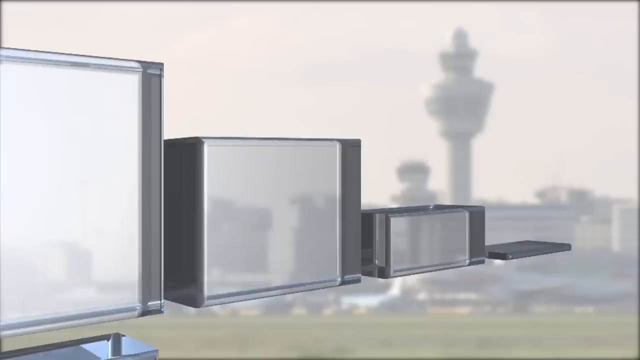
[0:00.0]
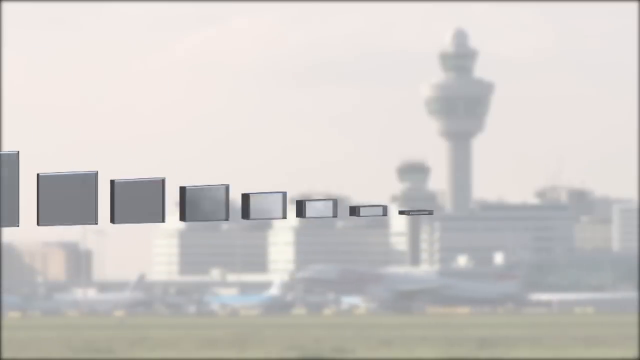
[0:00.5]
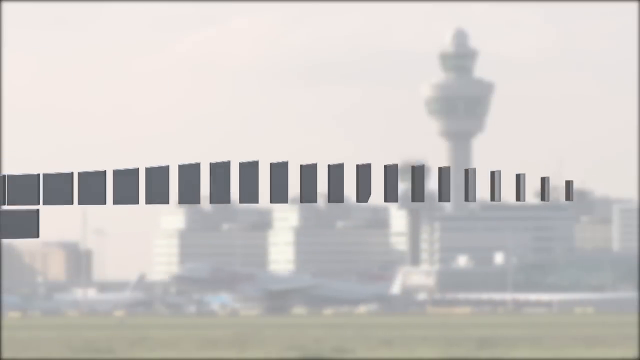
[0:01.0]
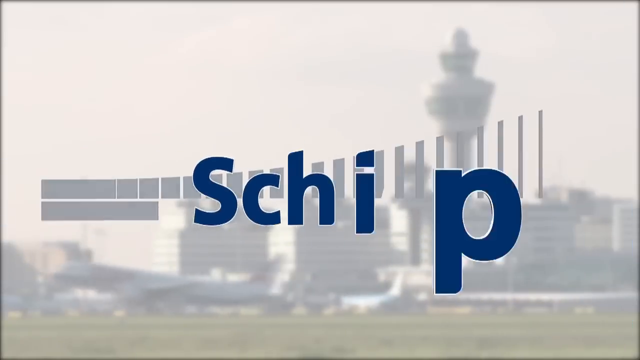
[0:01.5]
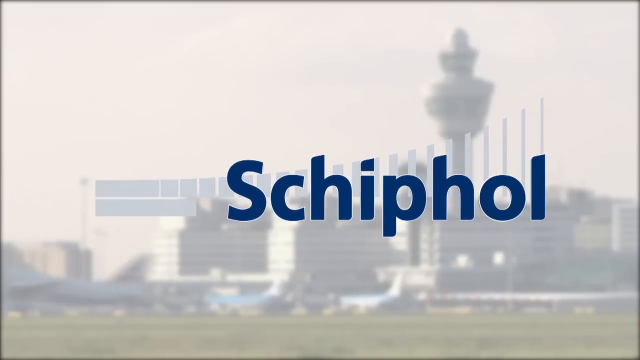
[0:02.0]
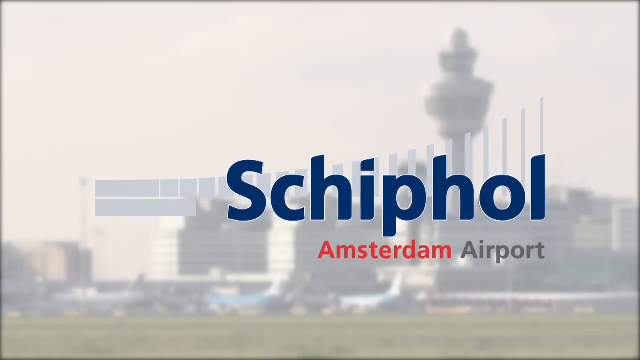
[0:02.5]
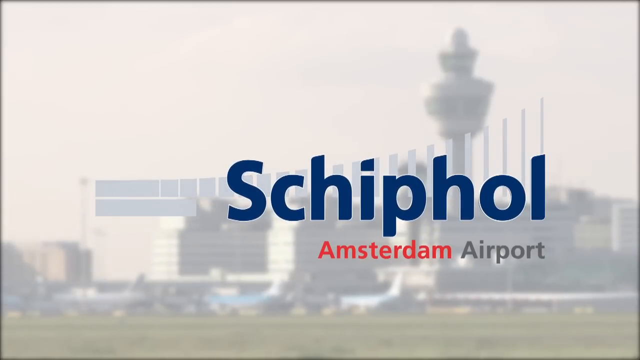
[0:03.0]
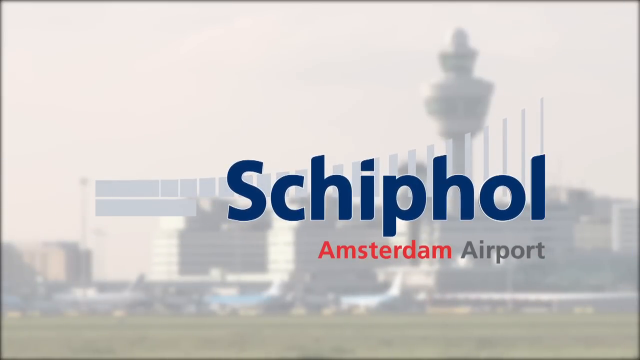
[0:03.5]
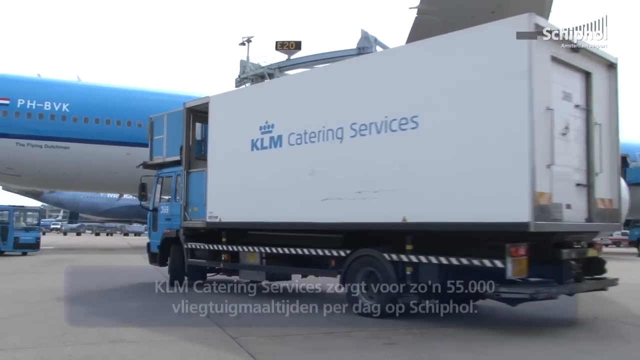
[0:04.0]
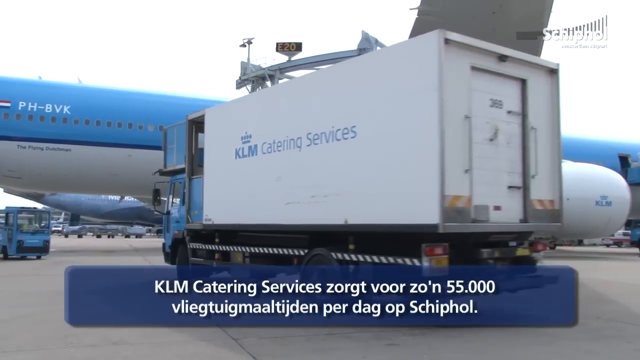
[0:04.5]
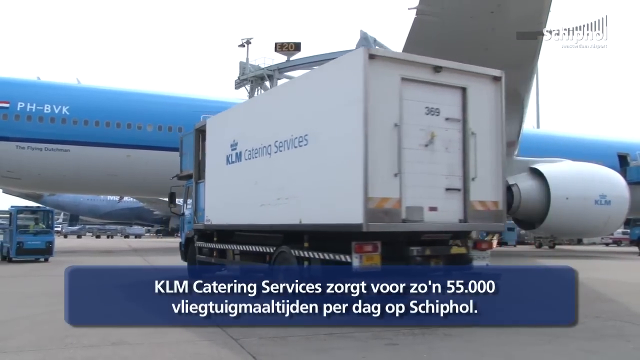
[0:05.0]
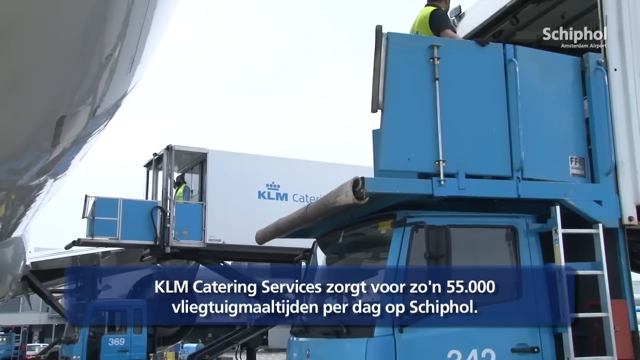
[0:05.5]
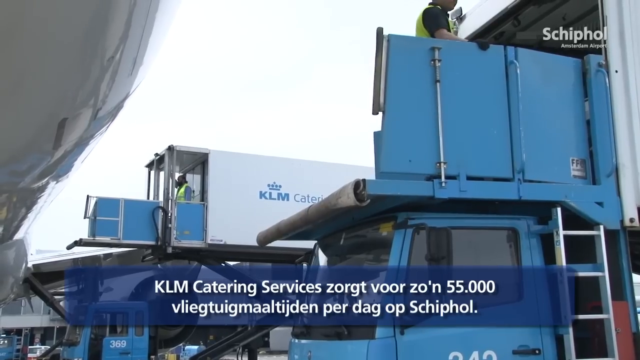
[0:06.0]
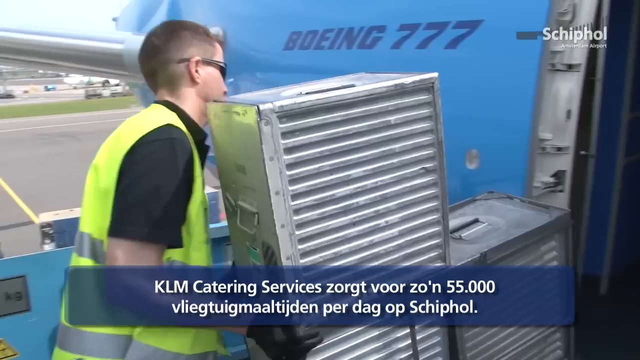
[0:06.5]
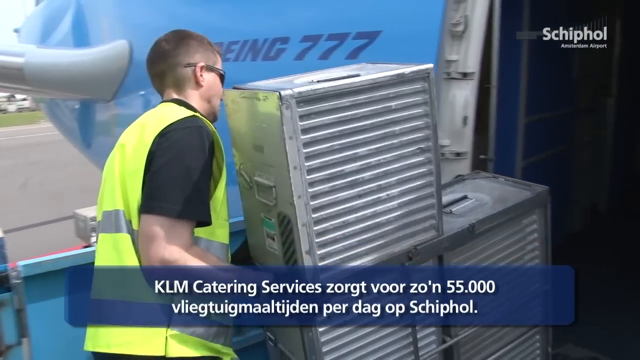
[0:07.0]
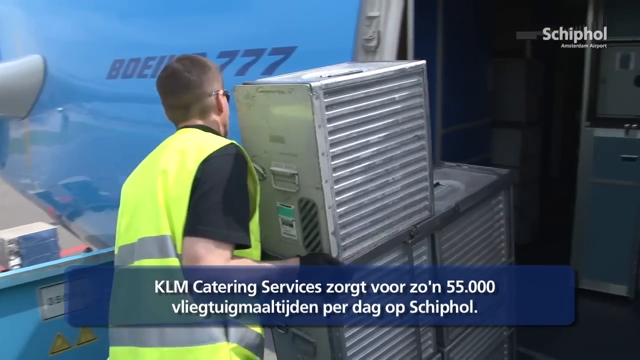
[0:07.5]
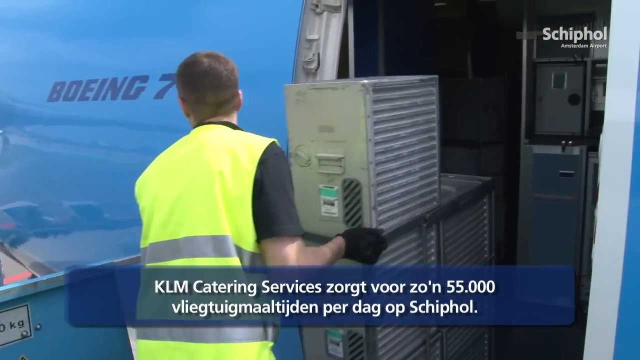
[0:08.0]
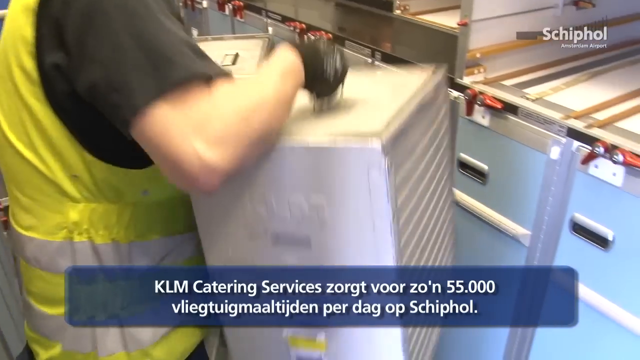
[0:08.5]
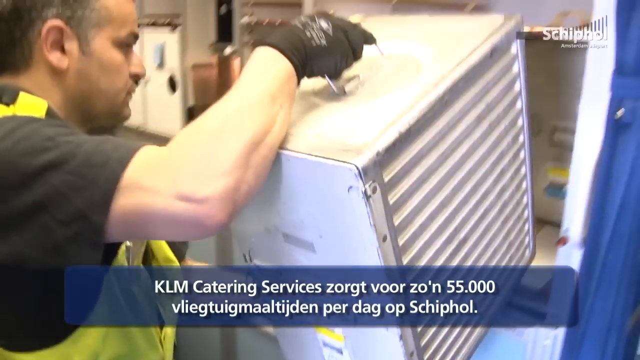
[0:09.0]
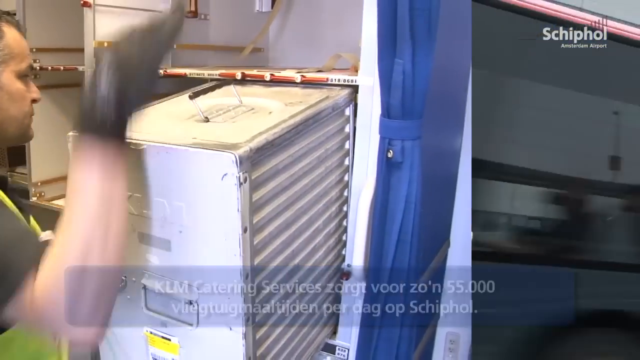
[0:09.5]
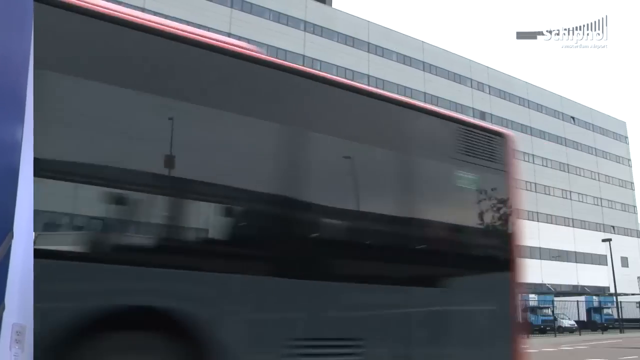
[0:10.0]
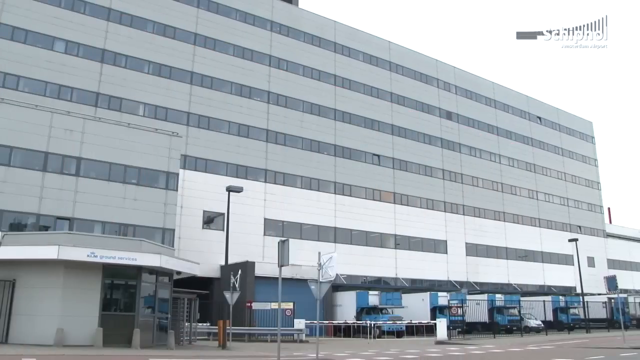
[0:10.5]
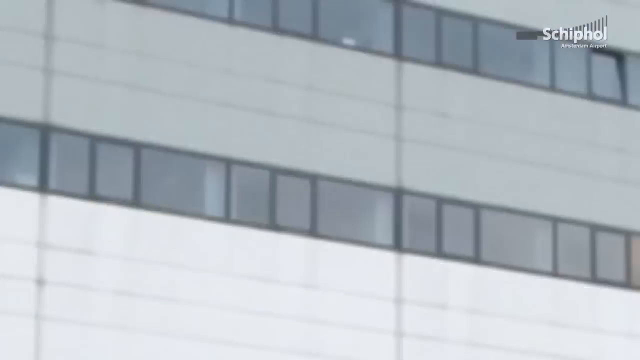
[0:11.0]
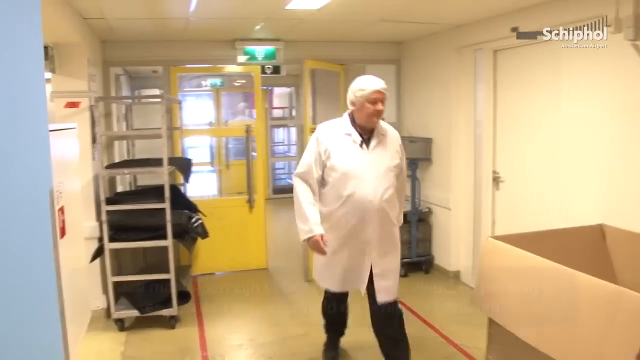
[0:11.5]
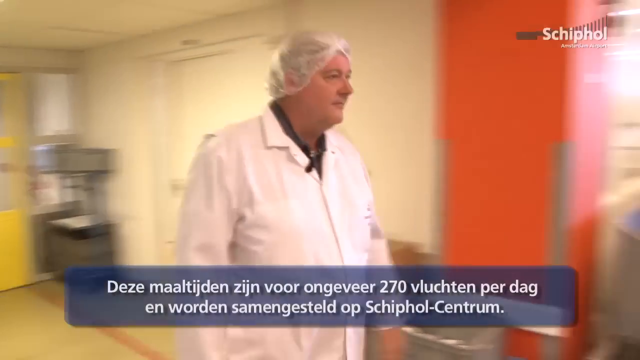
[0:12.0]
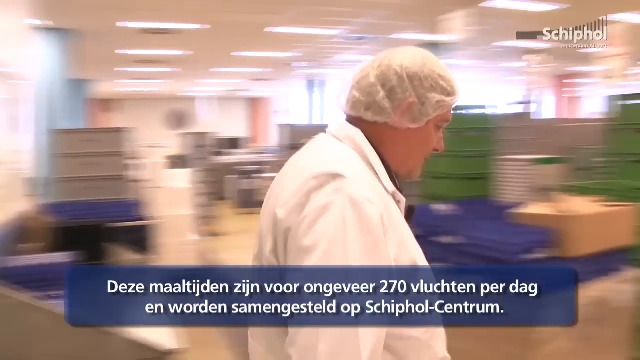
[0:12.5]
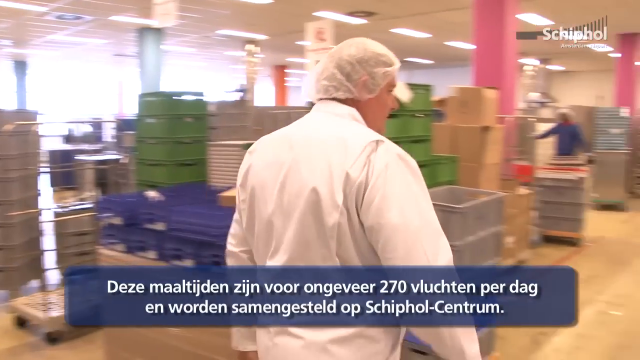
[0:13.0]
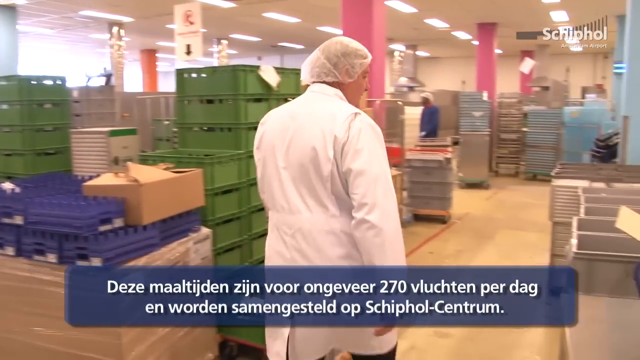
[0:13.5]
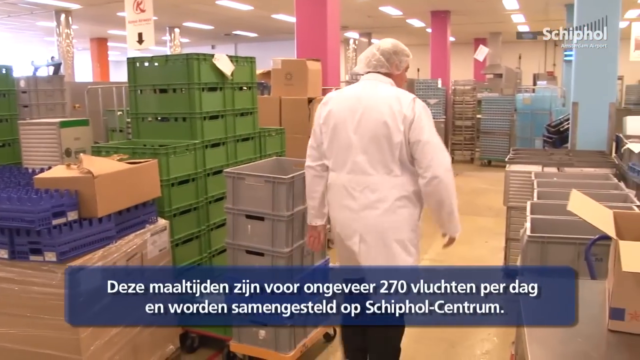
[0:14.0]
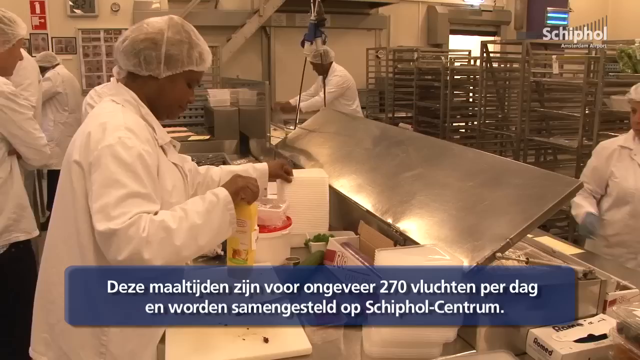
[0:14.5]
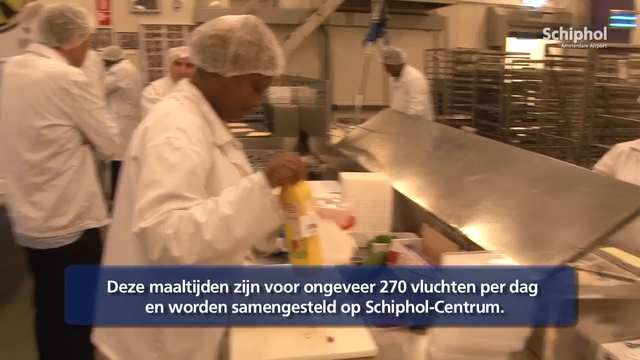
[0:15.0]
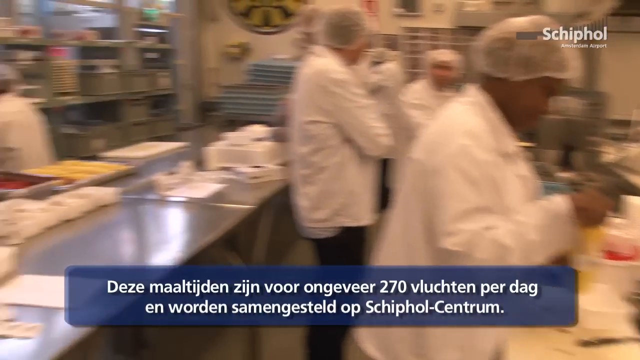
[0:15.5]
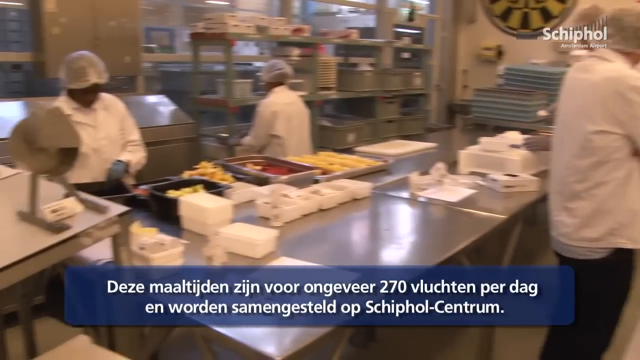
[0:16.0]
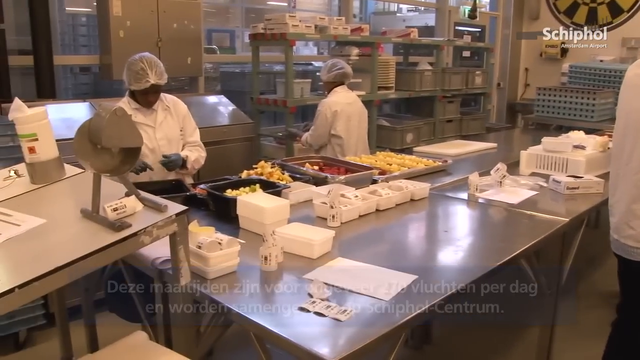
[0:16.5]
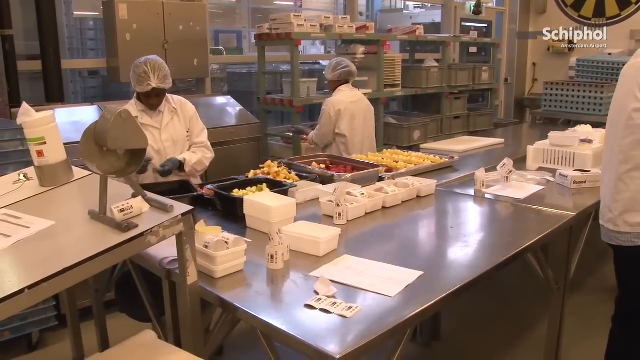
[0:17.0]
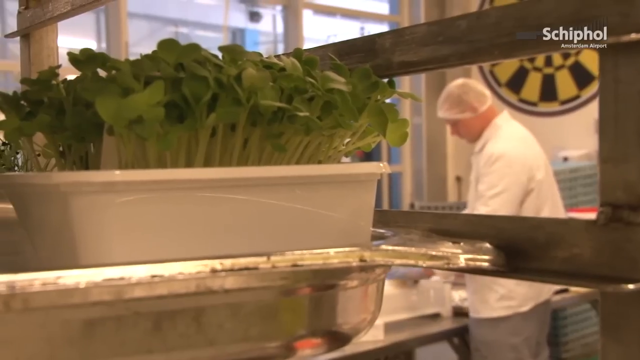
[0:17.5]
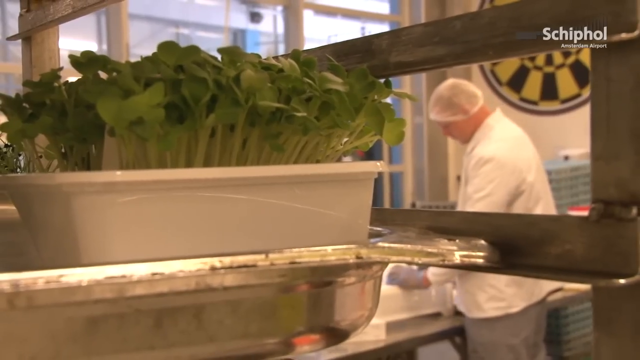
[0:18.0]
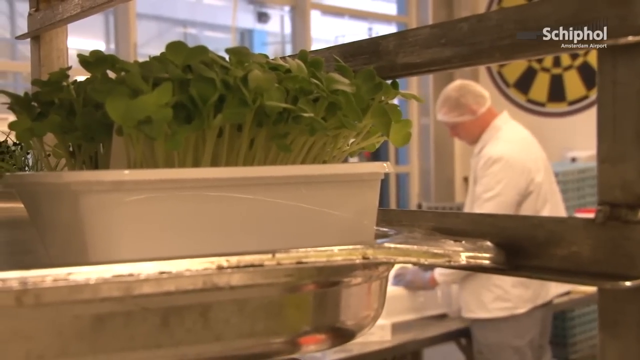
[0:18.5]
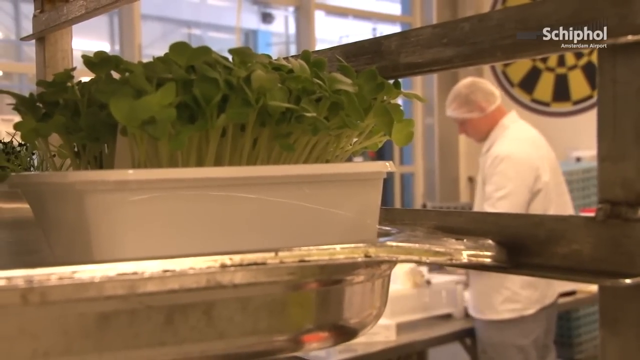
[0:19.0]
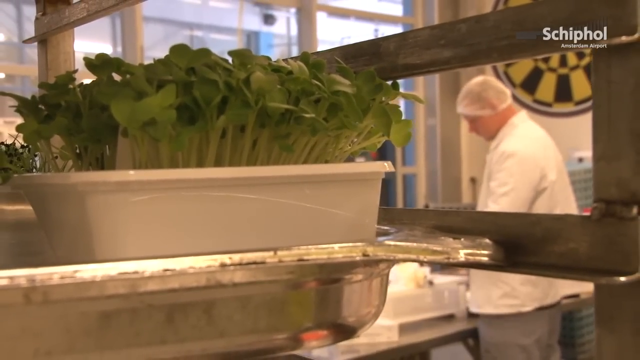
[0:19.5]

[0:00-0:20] The video shows scenes from an airport. A legend on the screen indicates Amsterdam Airport, and there are subtitles, mostly not in English, that might describe a catering service. A truck pulls up to an airplane, and a man in a yellow safety vest puts aluminum boxes onto the plane into a cargo area. A large man walks down a corridor somewhere in the airport and moves into a very large, almost warehouse-like space that appears to be a very large kitchen. A tray of what looks like some kind of herb or plants is shown with a chef working in the background; the chef wears a white head covering and a white chef's jacket. There is an exterior shot of the building, and the camera pans across a scene of chefs working, probably about eight of them.